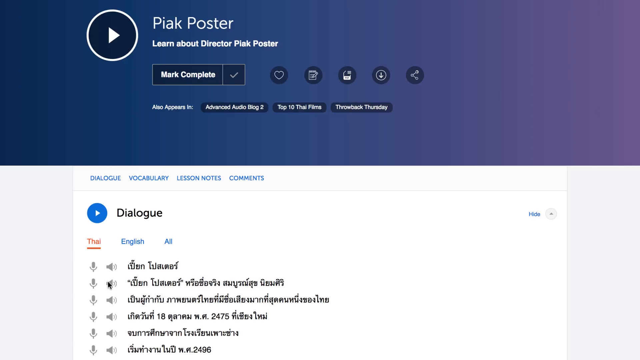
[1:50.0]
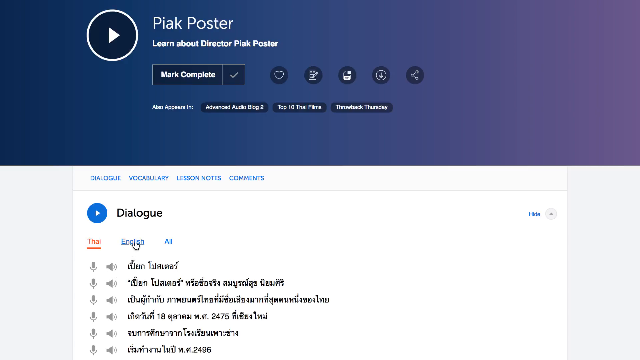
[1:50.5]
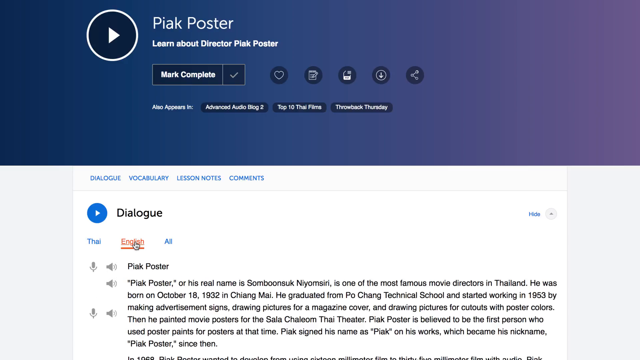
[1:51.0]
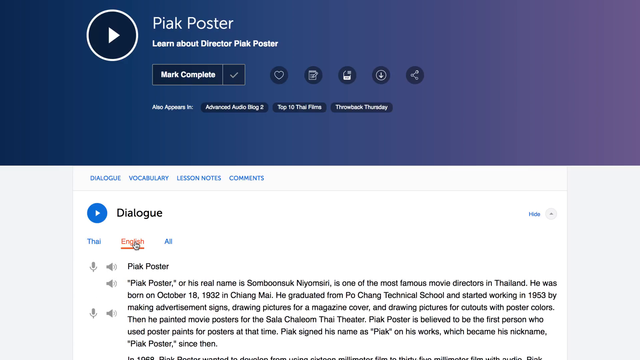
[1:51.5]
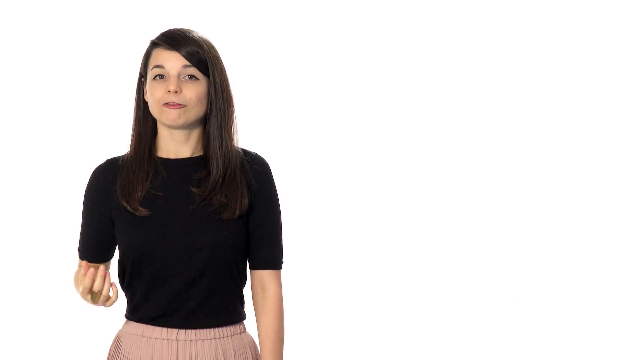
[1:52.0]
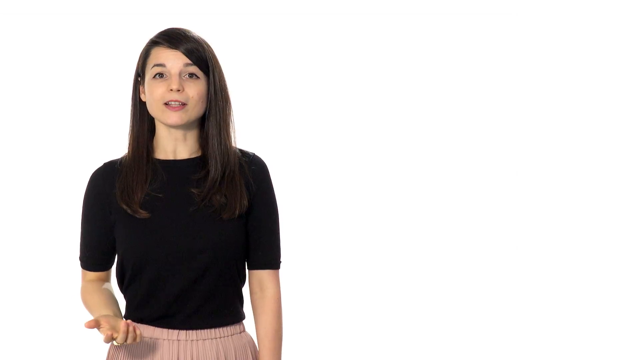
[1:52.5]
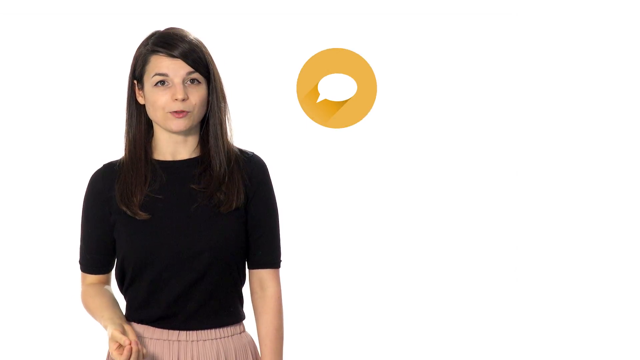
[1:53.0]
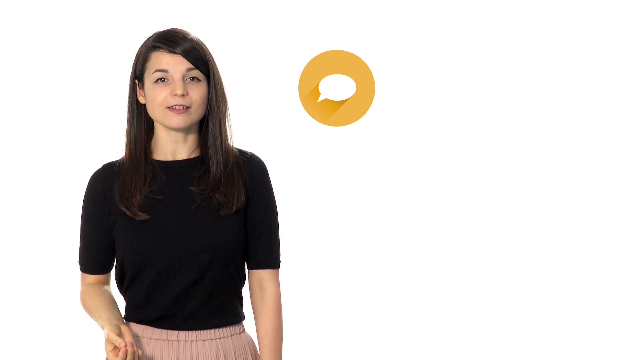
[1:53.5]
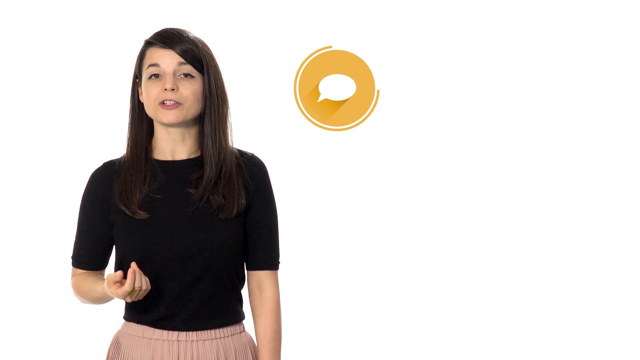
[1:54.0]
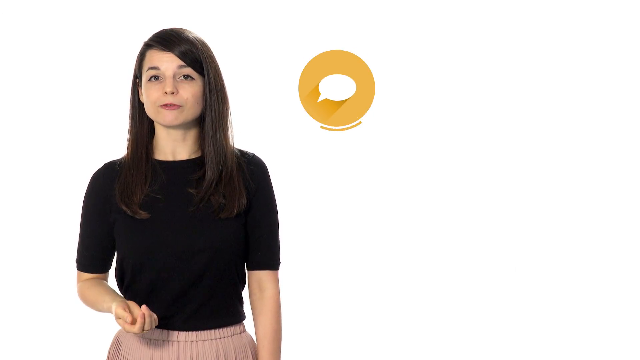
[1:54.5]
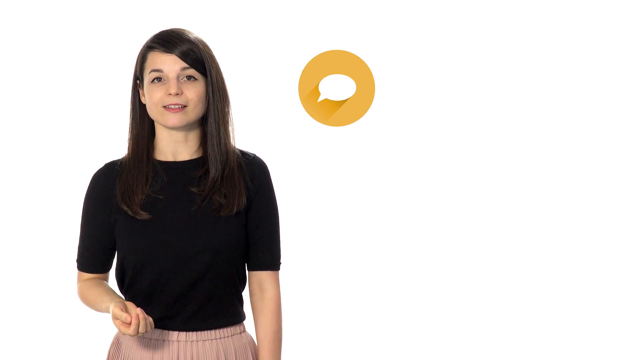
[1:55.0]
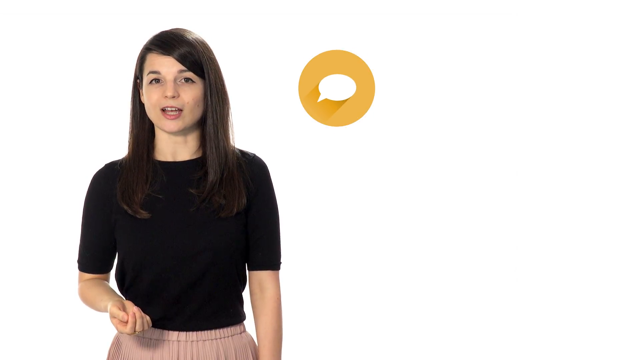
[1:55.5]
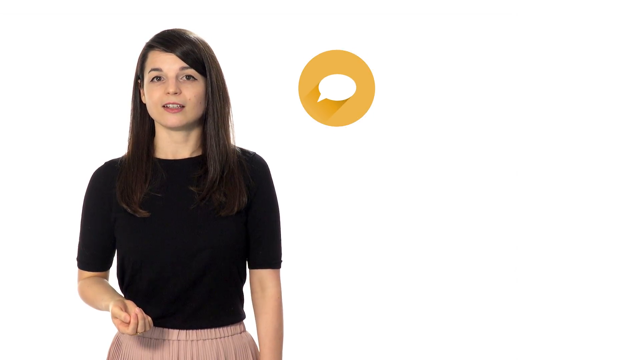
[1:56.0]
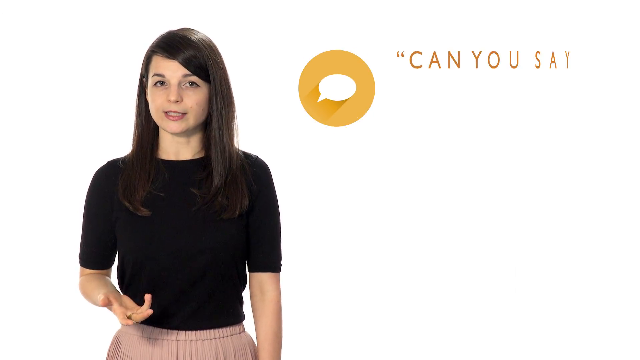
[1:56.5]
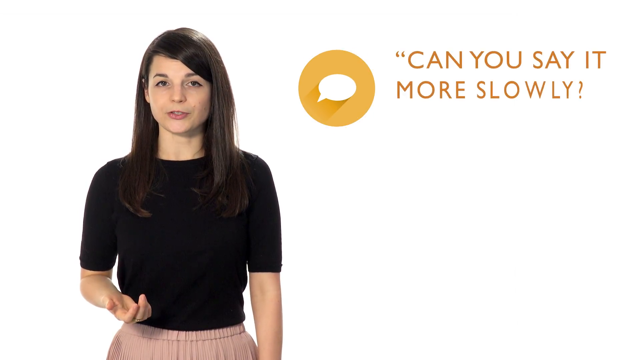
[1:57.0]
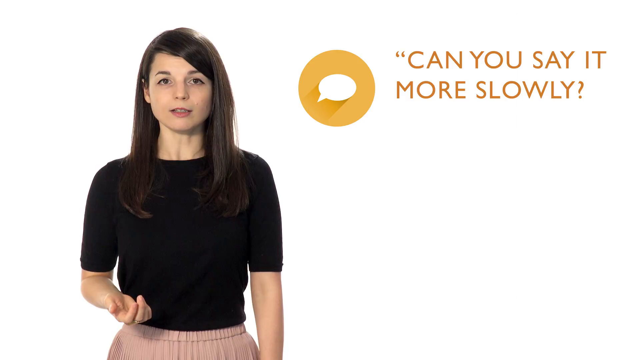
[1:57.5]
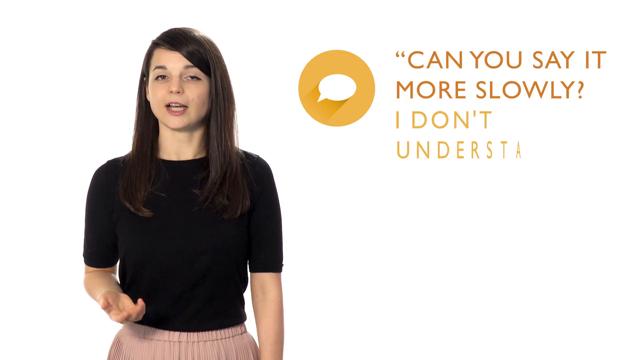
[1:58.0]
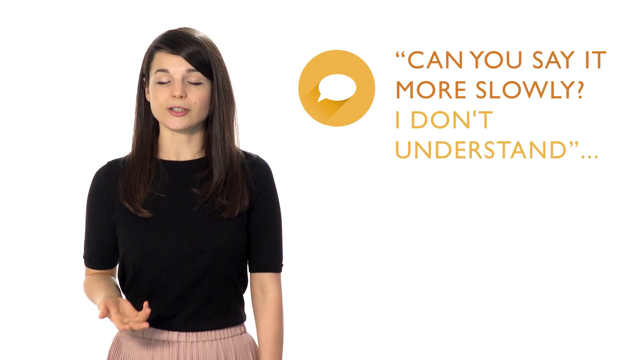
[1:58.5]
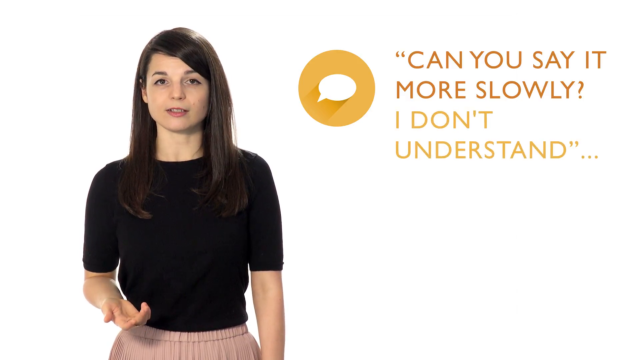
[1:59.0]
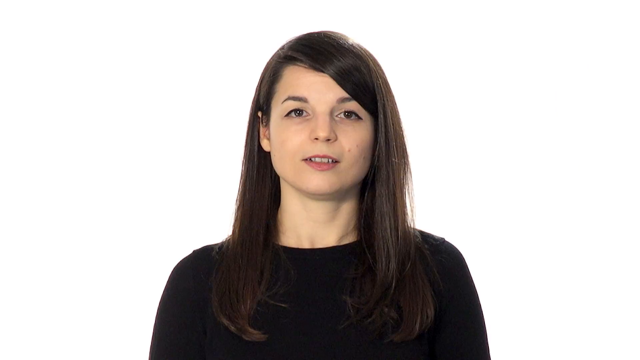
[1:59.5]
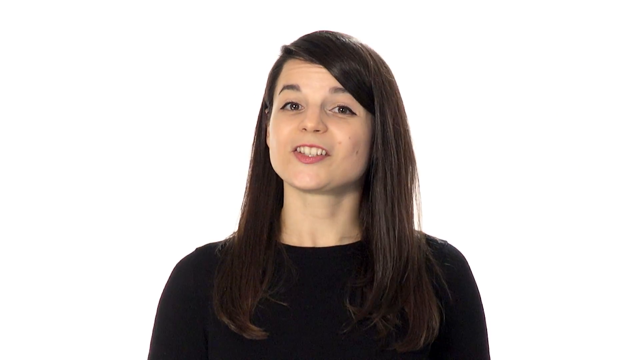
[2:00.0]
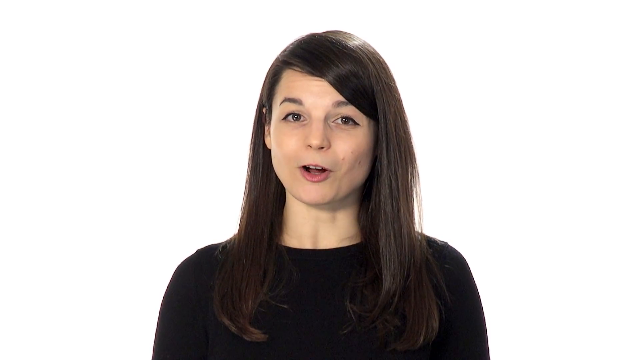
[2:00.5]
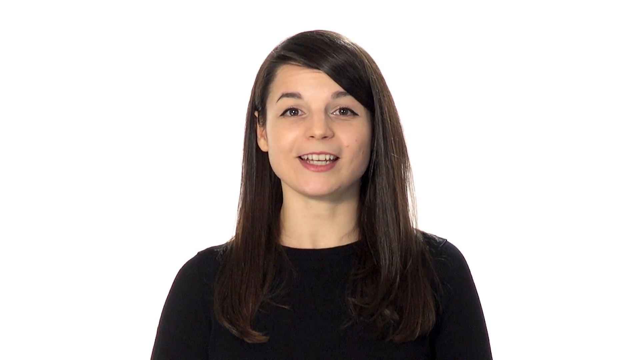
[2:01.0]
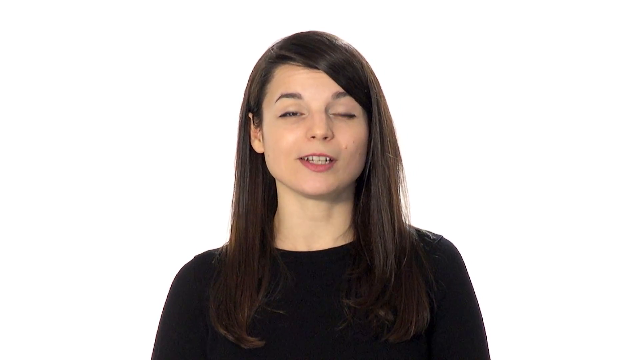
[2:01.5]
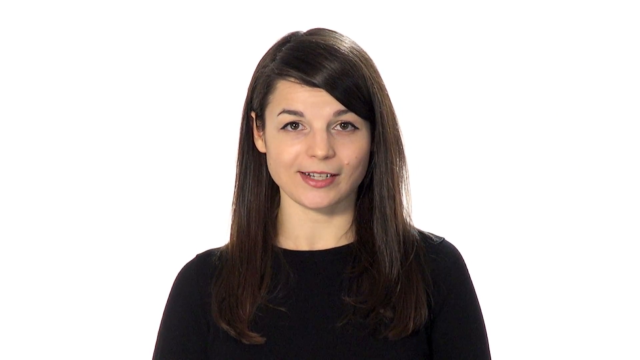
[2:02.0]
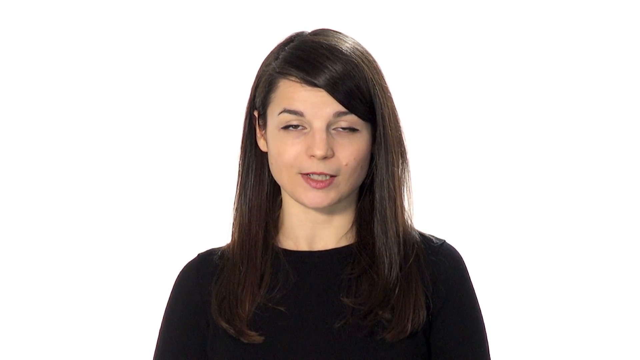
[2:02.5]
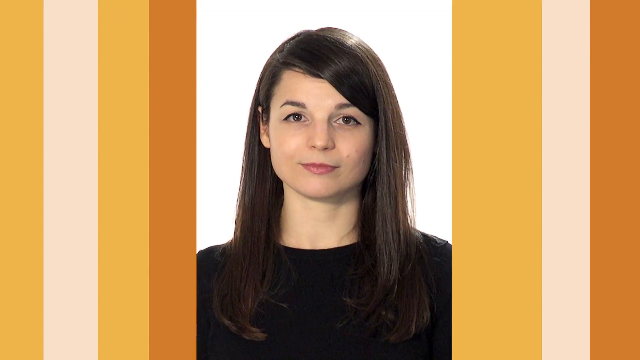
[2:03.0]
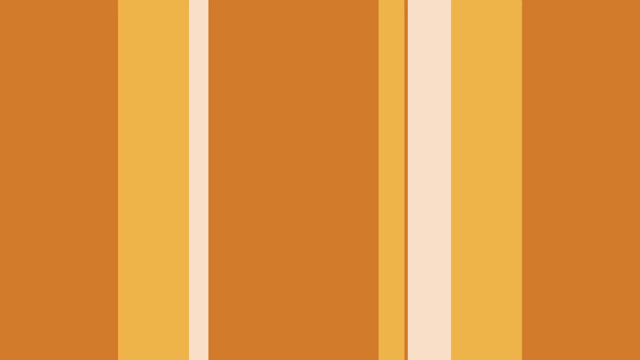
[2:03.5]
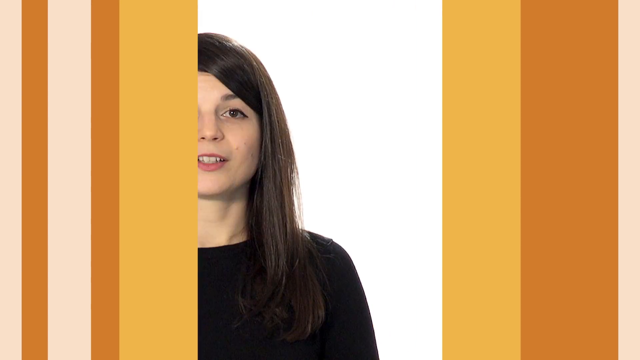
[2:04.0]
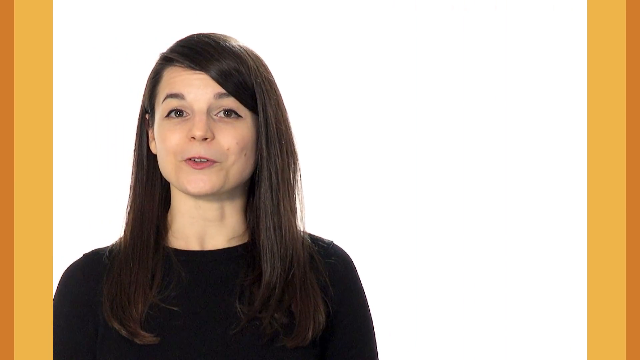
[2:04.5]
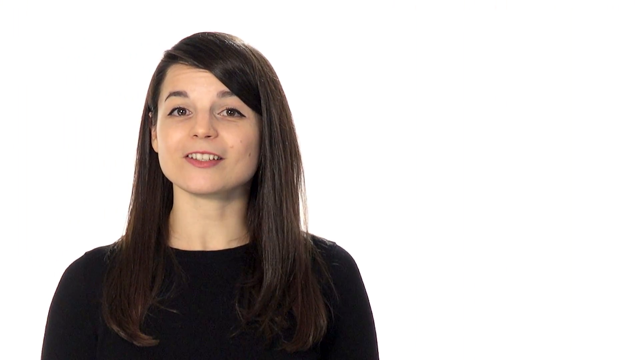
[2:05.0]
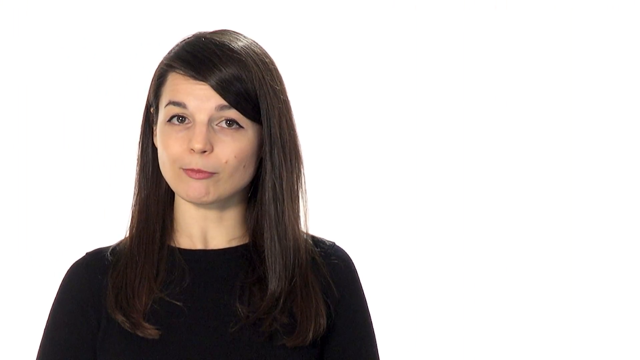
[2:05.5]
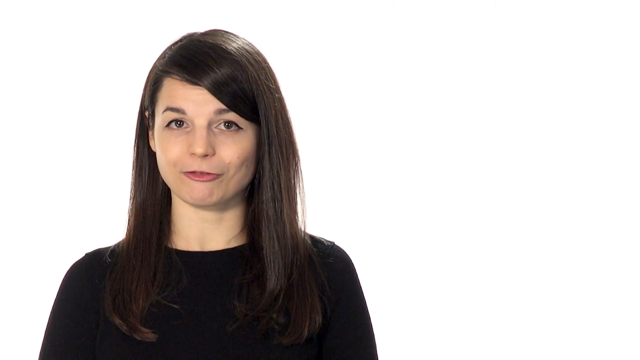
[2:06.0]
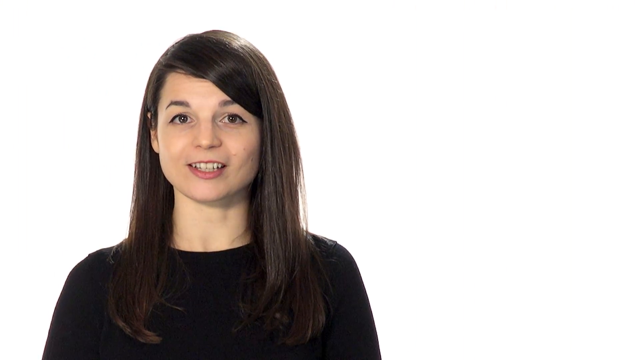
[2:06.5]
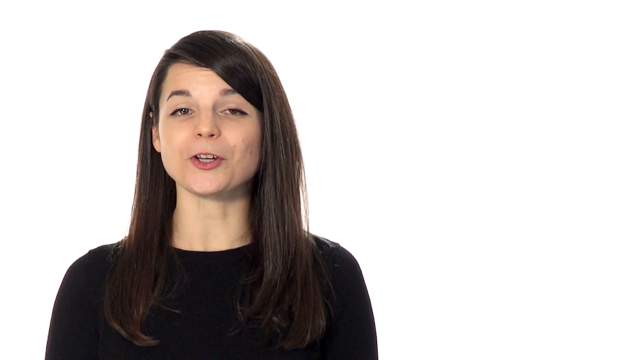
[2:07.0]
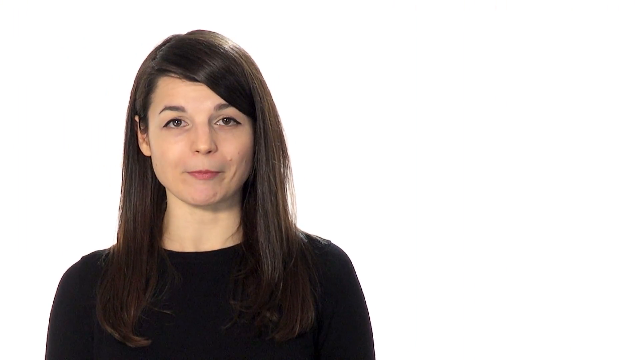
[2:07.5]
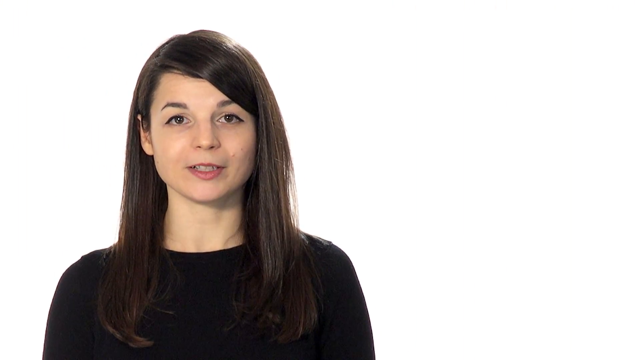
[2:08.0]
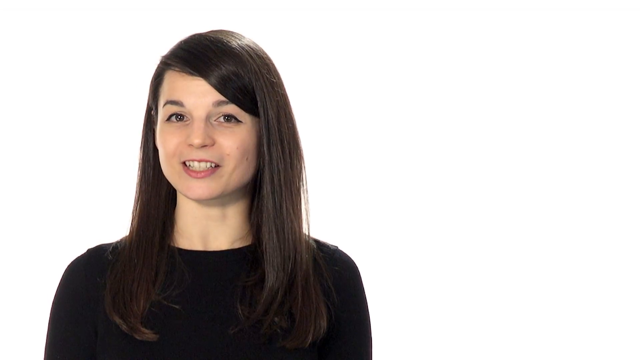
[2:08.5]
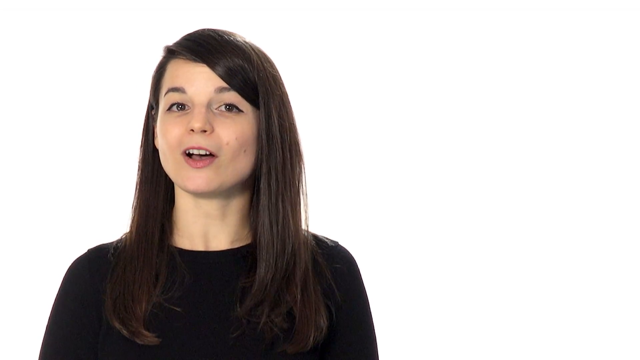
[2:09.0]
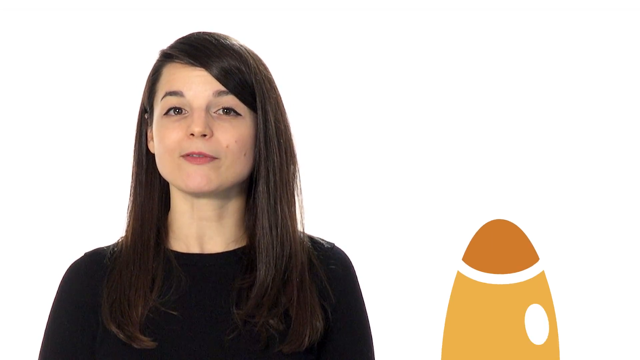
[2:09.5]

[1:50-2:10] A woman of Asian origin wearing black clothing stands before a white background, explaining a topic on languages. The main title reads "top four languages learning fears according to our users." The items are numbered, and number one reads "I am not good enough to start speaking yet." She elaborates for some time, then a written solution appears: "the best way to get good at speaking is to start speaking at day one." After elaborating further, she moves to problem number two, which reads "I am afraid I'll never be fluent." She elaborates for a while, then a solution appears that reads "make daily goals like having just a five-minute conversation."